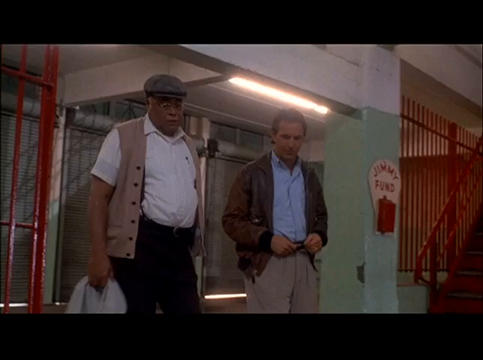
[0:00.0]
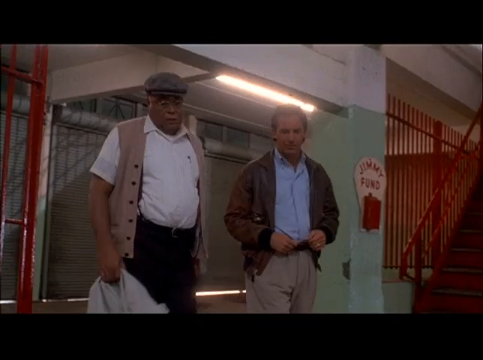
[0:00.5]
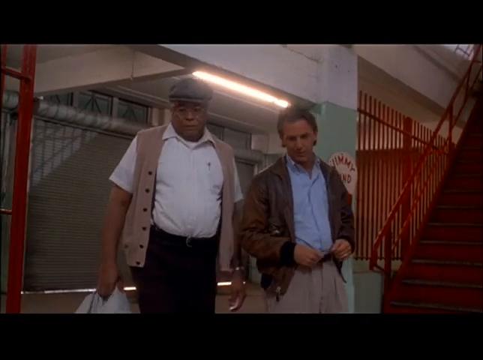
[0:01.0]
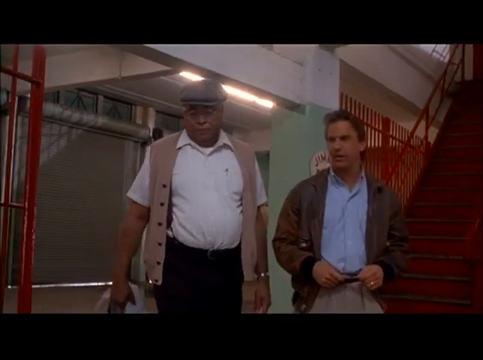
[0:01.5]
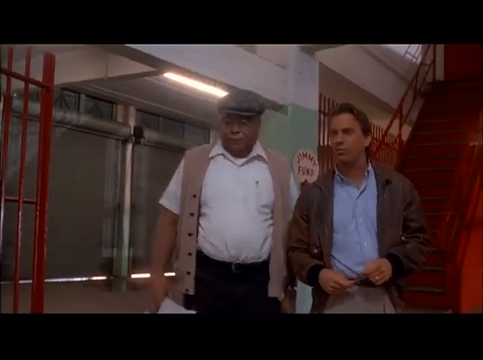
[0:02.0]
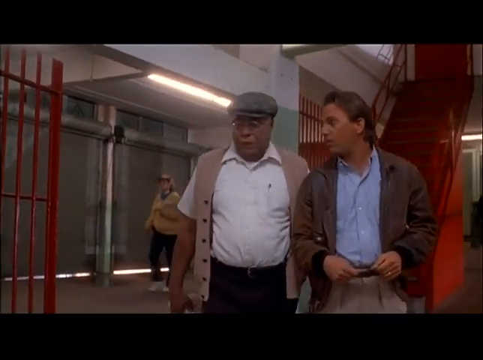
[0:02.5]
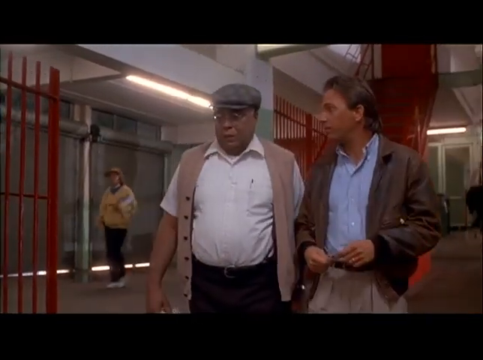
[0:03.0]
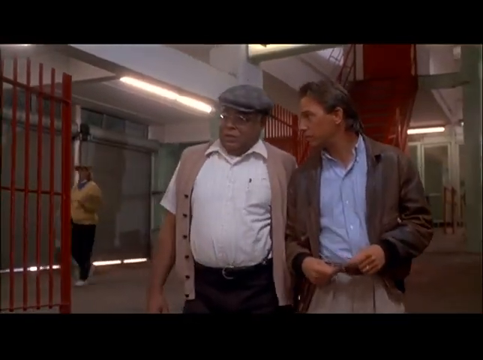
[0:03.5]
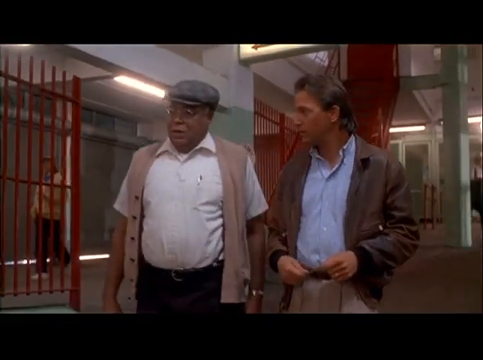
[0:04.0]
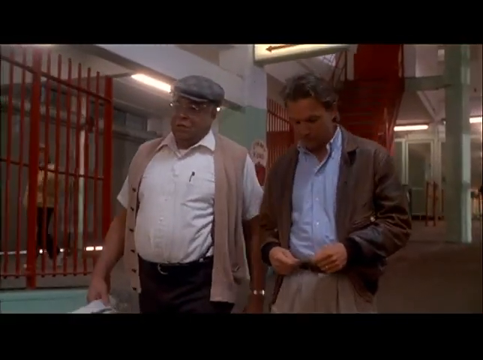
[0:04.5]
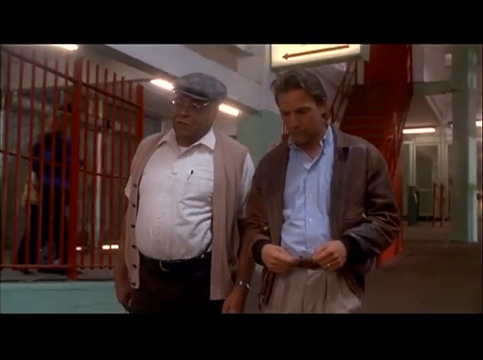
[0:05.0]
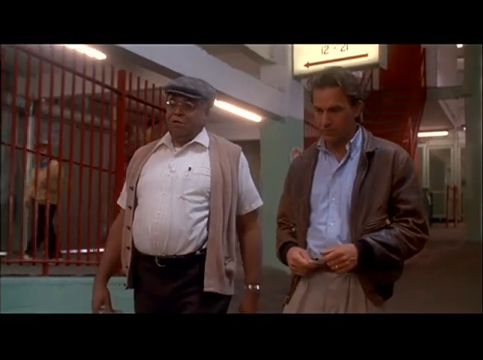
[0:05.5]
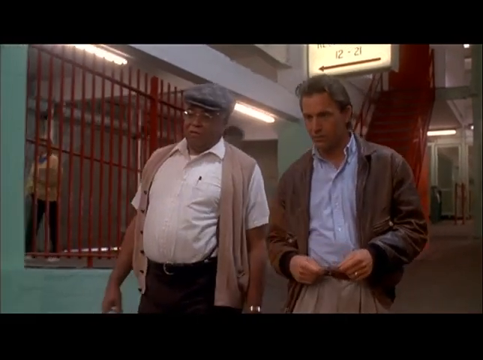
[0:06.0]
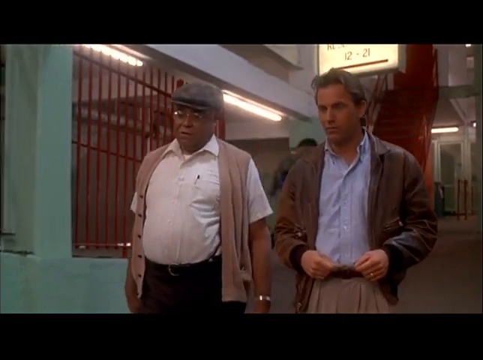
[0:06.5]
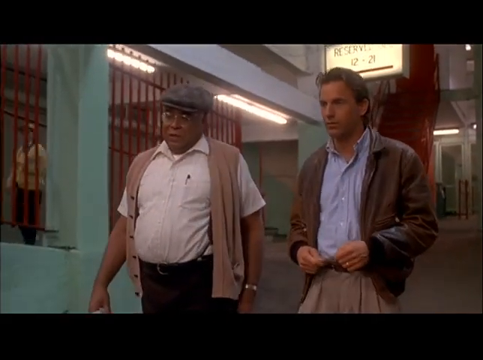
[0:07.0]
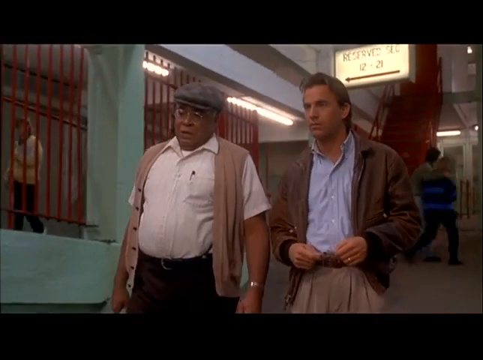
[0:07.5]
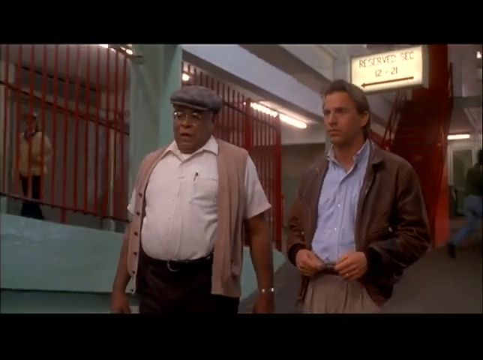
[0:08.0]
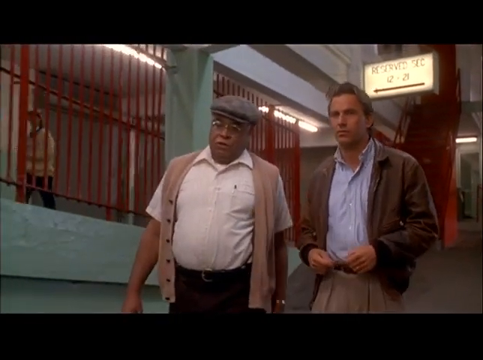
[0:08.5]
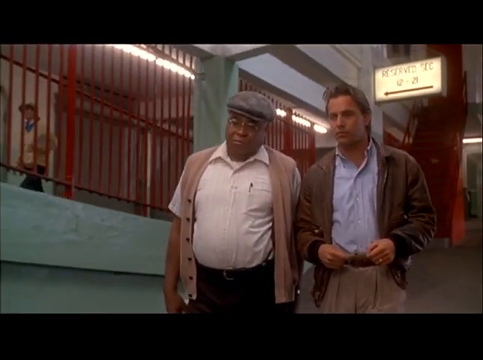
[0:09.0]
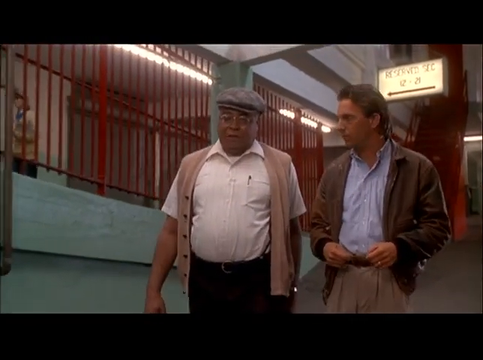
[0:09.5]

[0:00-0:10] Two adult men are outside a large building, possibly a hotel. The man on the left side of the screen is of African descent and looks like James Earl Jones. He wears a gray hat, glasses, a light brown or tan vest, a white button-up shirt with a pin in the left chest pocket, and black pants, and he holds some kind of cloth in his right hand. Next to him on the right, in the center of the screen, is a Caucasian man with dark brown hair, wearing a blue dress shirt or button-up shirt, a brown bomber jacket that looks like leather or pleather, and khaki pants. Both men are walking away from the building, and the Caucasian man is talking to the man of African descent.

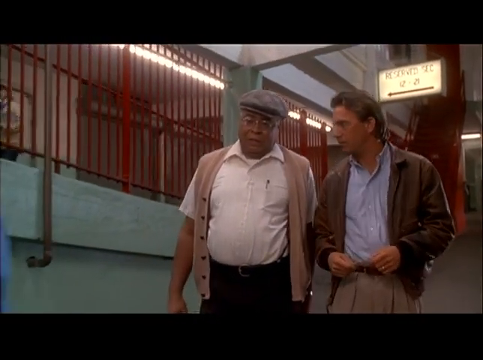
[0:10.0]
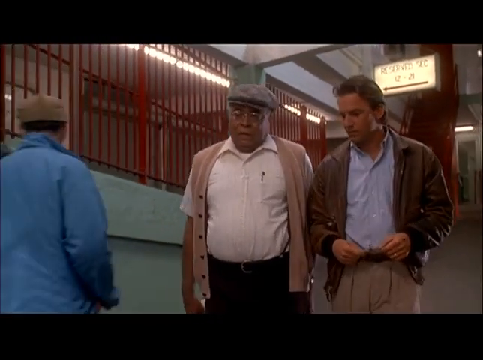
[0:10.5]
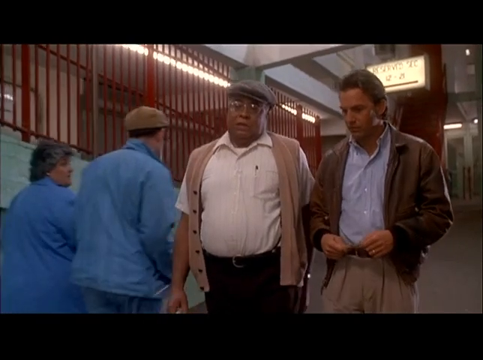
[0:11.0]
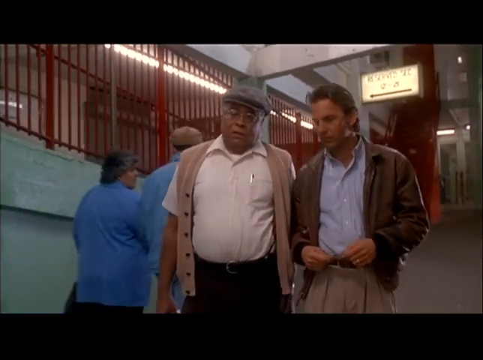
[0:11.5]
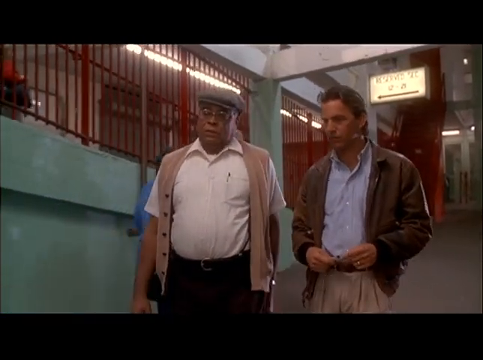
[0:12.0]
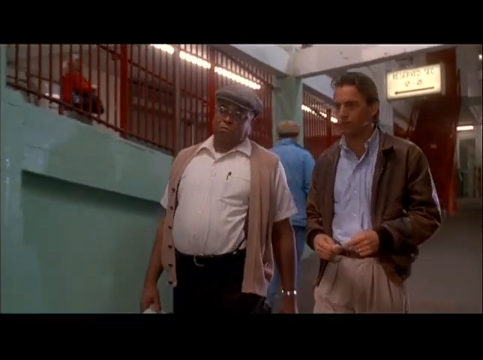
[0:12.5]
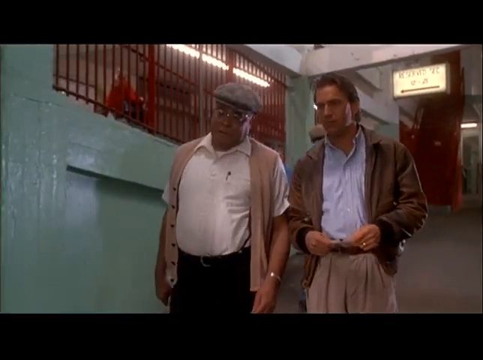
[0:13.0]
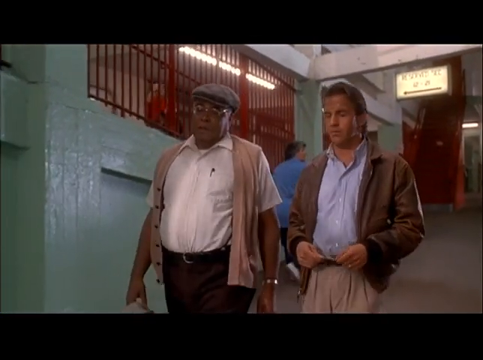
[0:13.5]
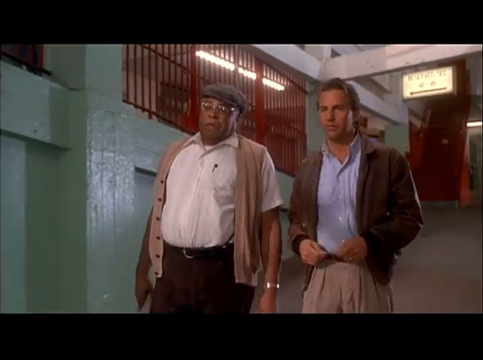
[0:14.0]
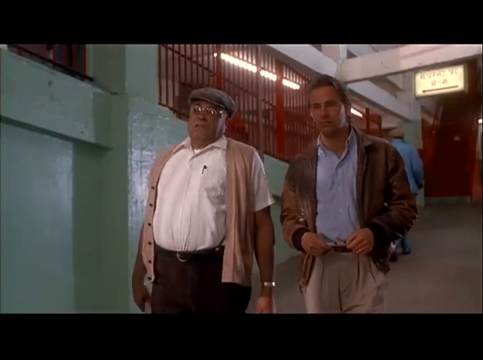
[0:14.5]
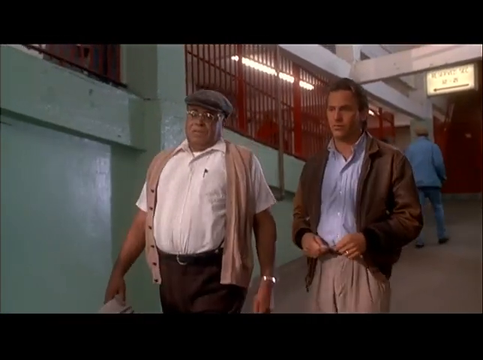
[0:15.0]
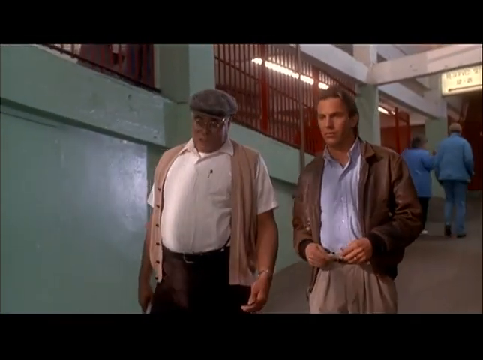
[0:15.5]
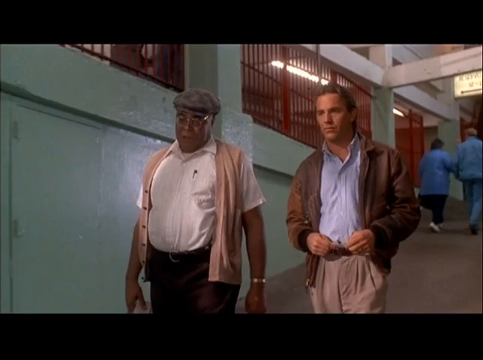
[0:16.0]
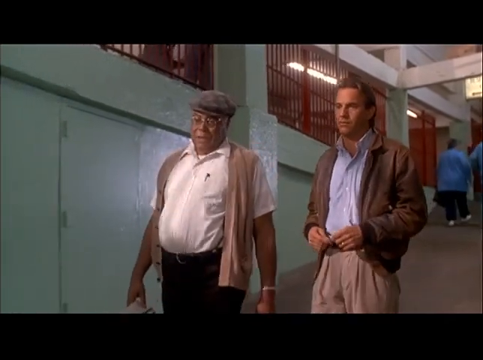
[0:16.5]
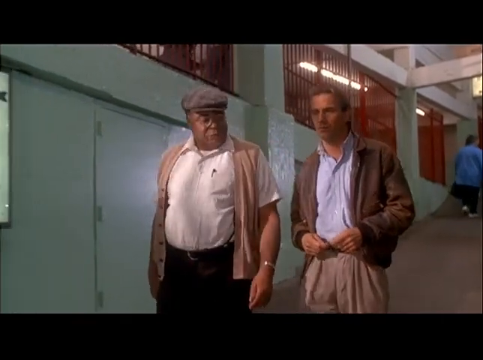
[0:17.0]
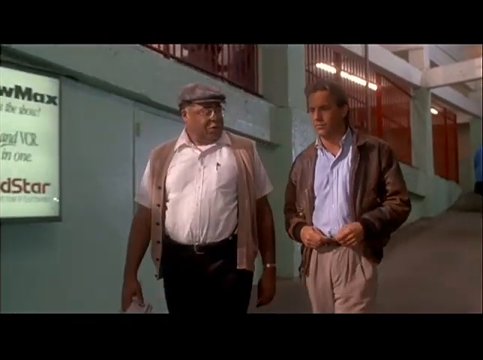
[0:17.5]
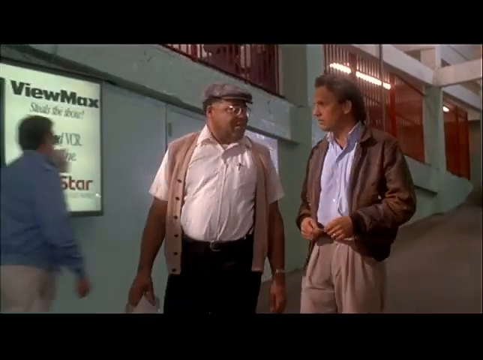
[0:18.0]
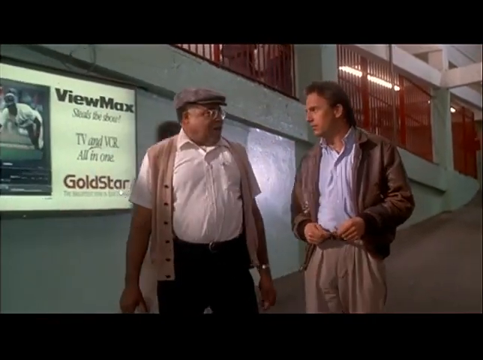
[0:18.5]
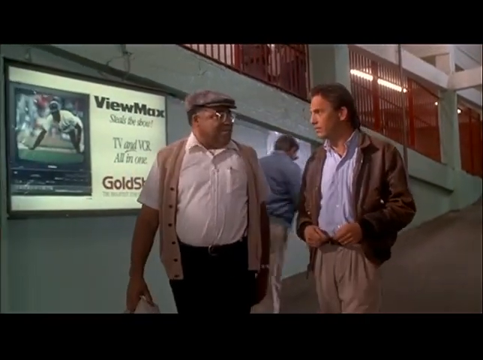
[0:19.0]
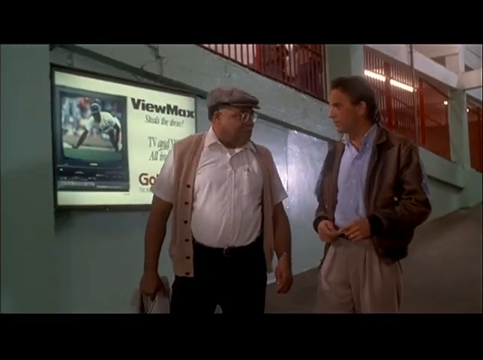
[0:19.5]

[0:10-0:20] Two adult men are on screen. In the center is a man of African descent who looks like James Earl Jones, wearing a gray hat, glasses, a white button-up shirt with what looks like a pin in the left chest pocket, a light tan or light brown vest over the shirt, and black pants with a black belt. Right next to him on his left is a man with dark brown or kind of blondish brown hair, a blend of the two, wearing a blue button-up dress shirt, a brown-looking bomber jacket that looks like it is made of leather or pleather, and khaki pants with a dark brown or black belt. The two men walk down a cement walkway as a couple of other people walk past them. The man of African descent is talking to the Caucasian man.